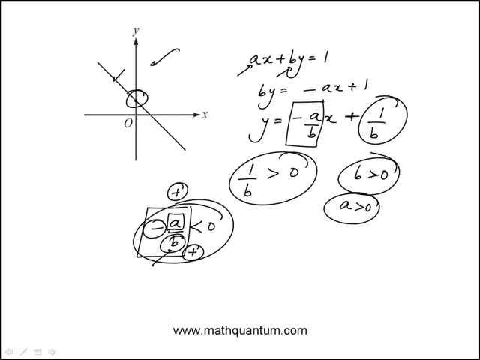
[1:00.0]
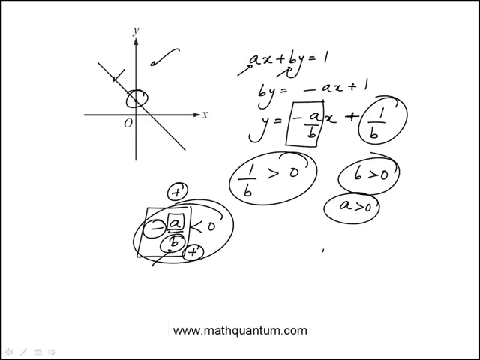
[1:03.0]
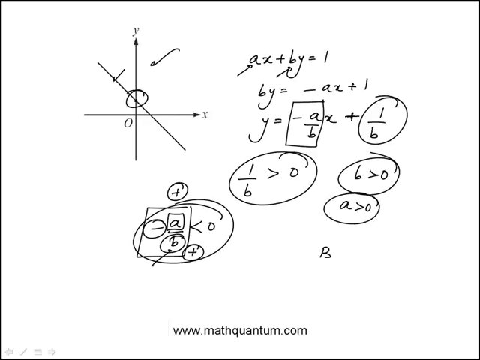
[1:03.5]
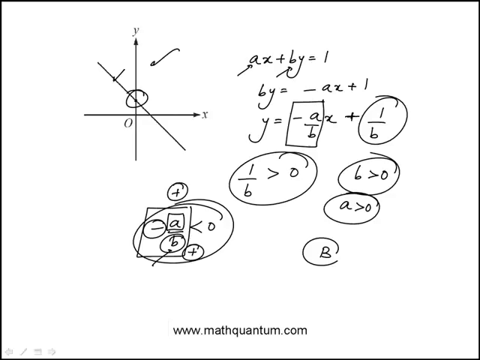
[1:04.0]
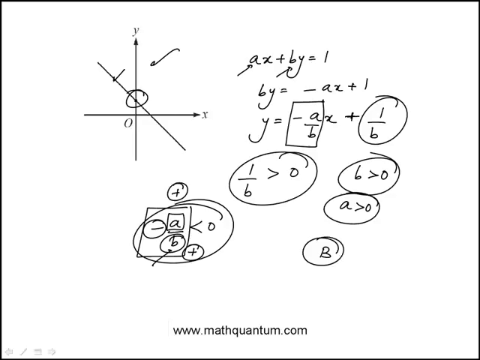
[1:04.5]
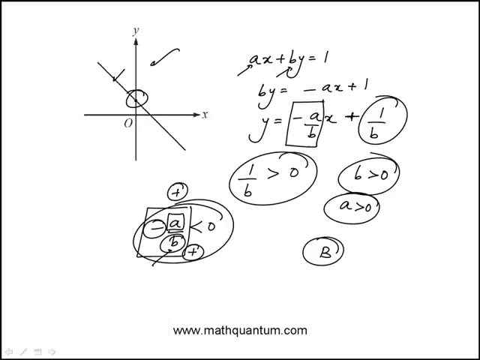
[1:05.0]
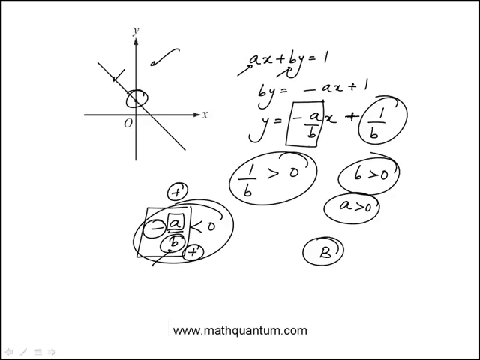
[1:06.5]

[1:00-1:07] The white sheet of paper is displayed, and more writing is added to it. On the screen are the equations ax + by = 1, by = −ax + 1, y = −ax/b + 1/b, 1/b > 0, b > 0 and a > 0. In the bottom left is an a, along with −a/b < 0. They add more, putting b in a circle over it. In the top left of the screen are lines, a y-axis and an x-axis.